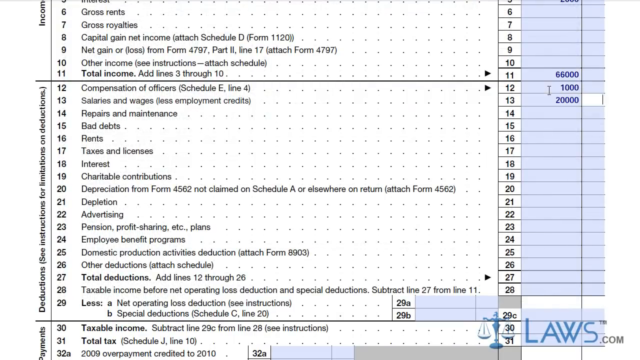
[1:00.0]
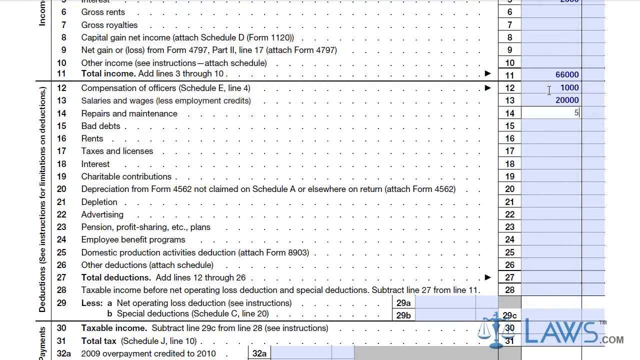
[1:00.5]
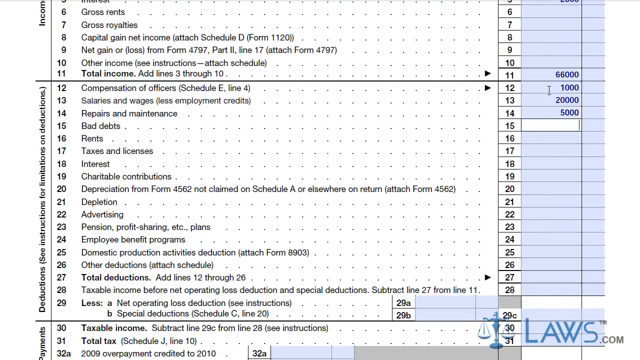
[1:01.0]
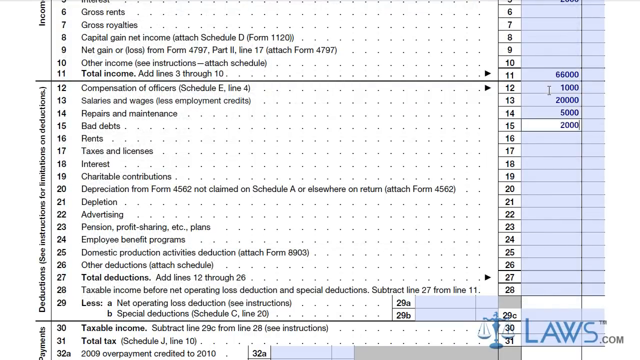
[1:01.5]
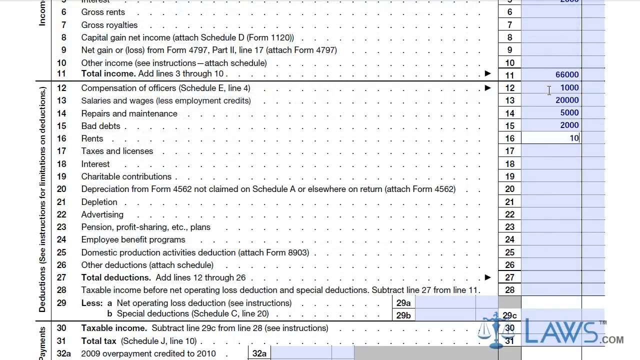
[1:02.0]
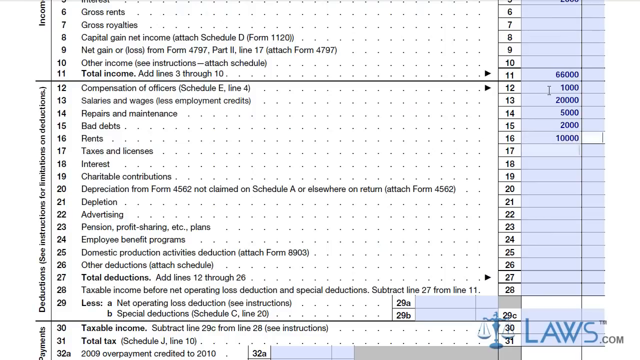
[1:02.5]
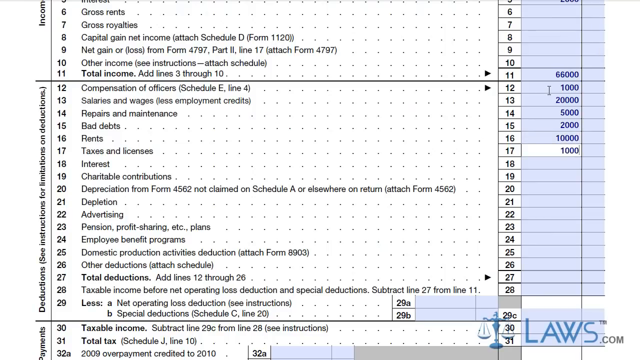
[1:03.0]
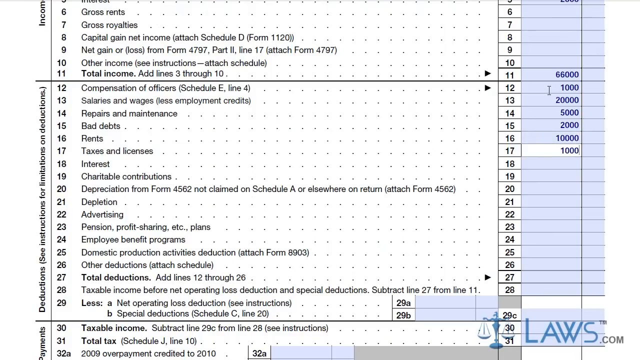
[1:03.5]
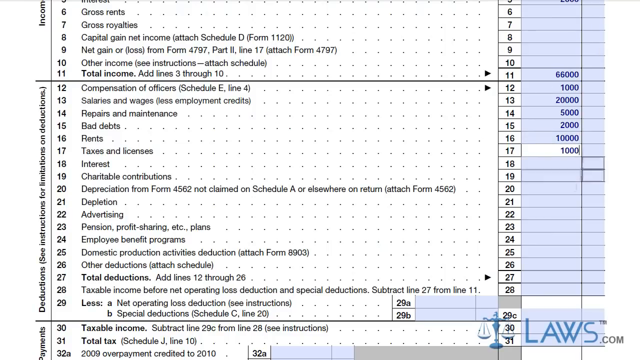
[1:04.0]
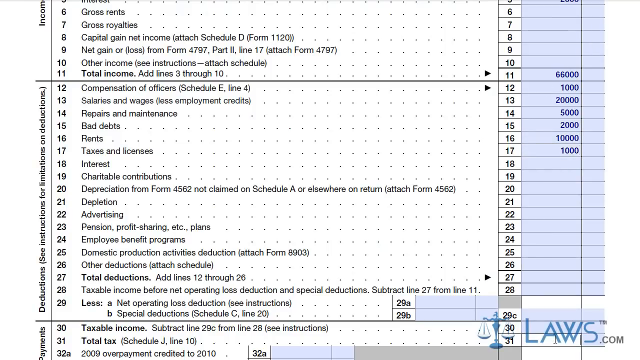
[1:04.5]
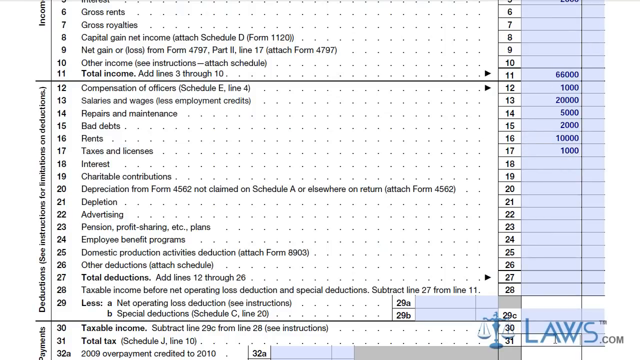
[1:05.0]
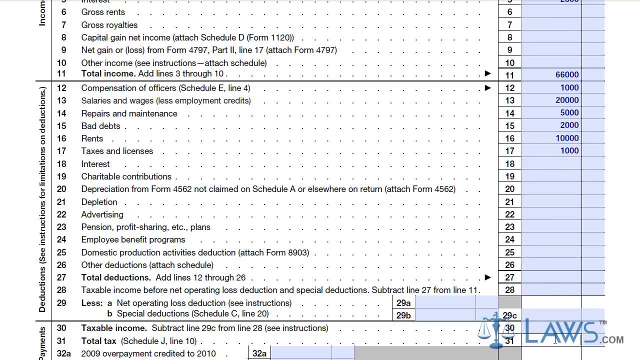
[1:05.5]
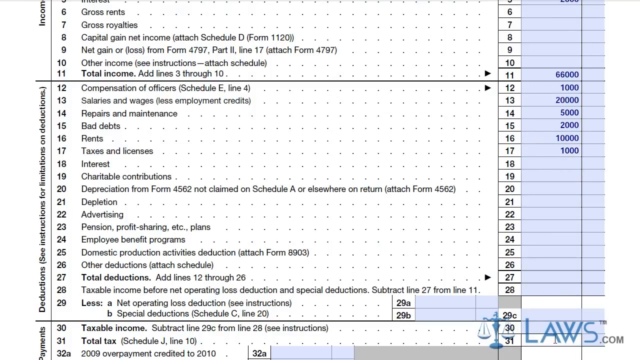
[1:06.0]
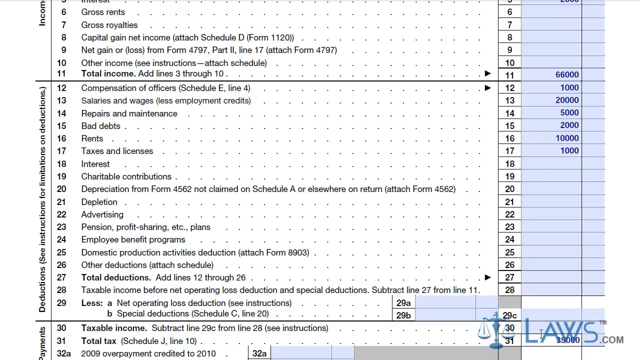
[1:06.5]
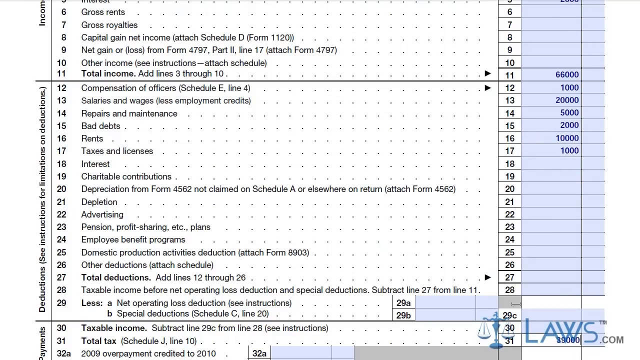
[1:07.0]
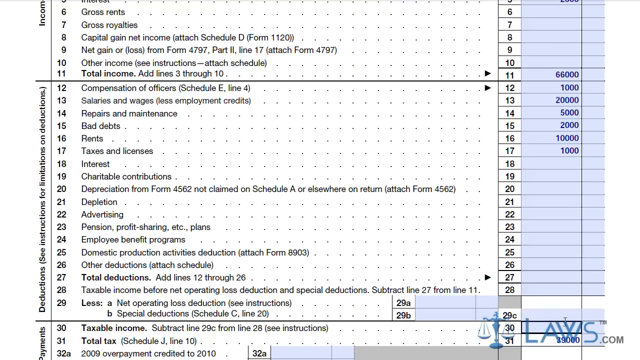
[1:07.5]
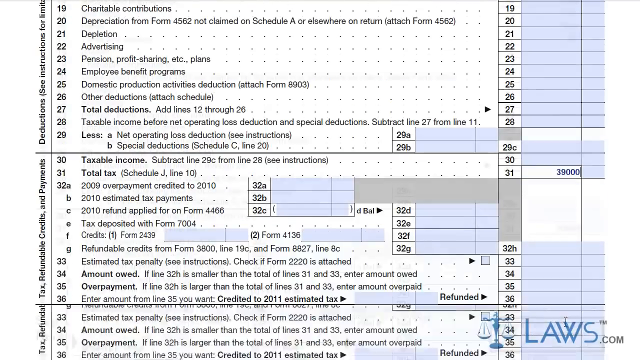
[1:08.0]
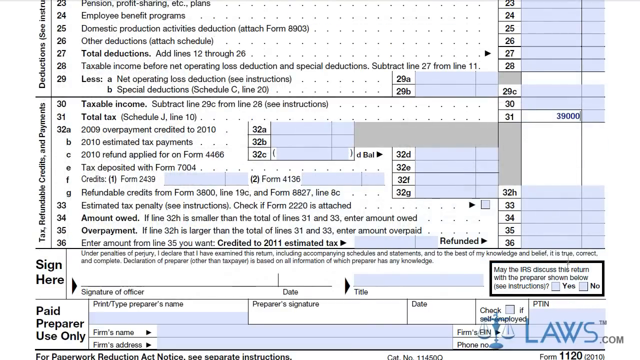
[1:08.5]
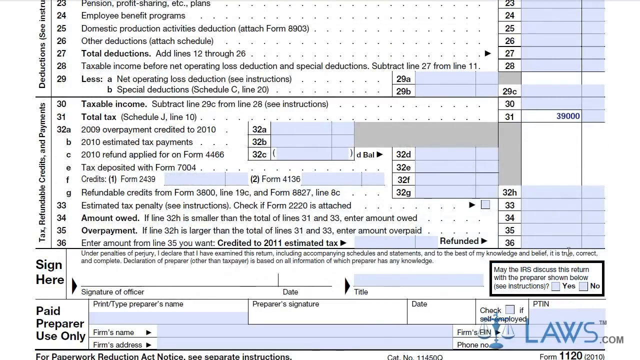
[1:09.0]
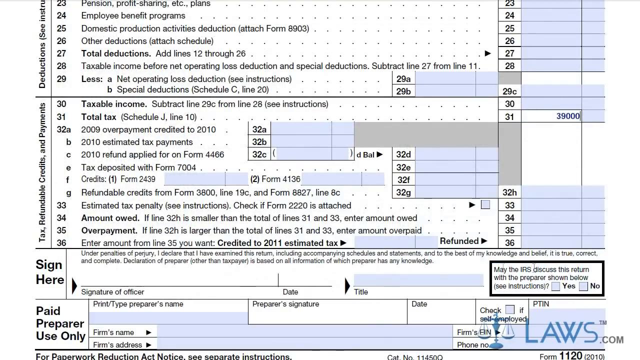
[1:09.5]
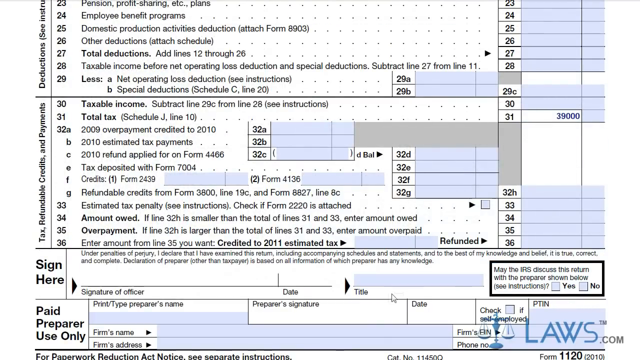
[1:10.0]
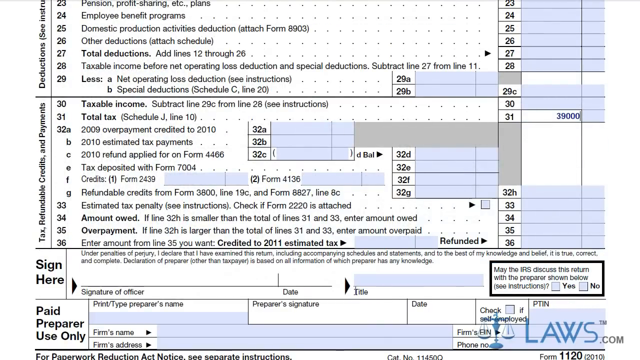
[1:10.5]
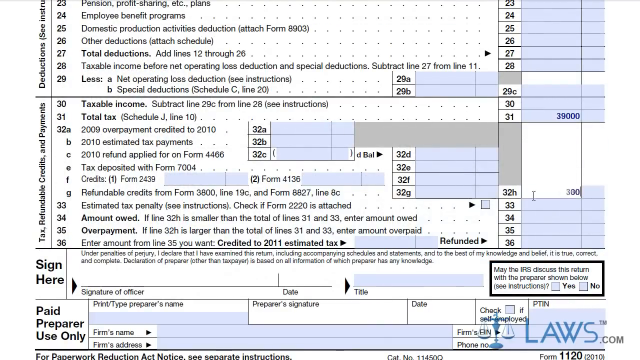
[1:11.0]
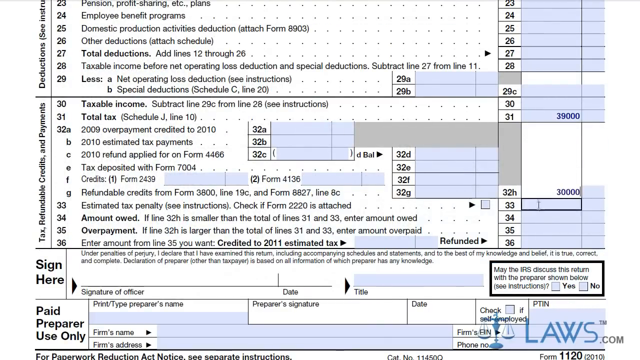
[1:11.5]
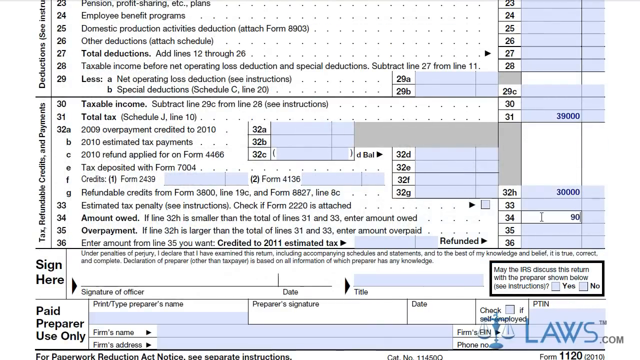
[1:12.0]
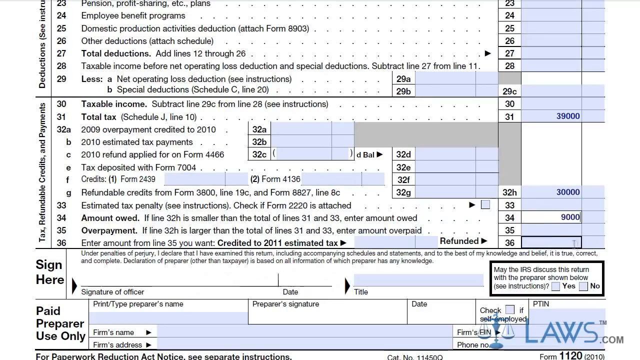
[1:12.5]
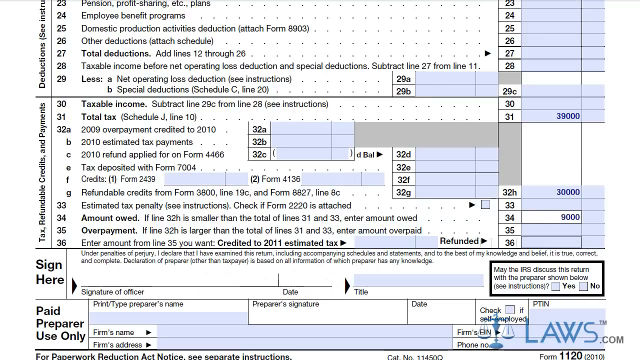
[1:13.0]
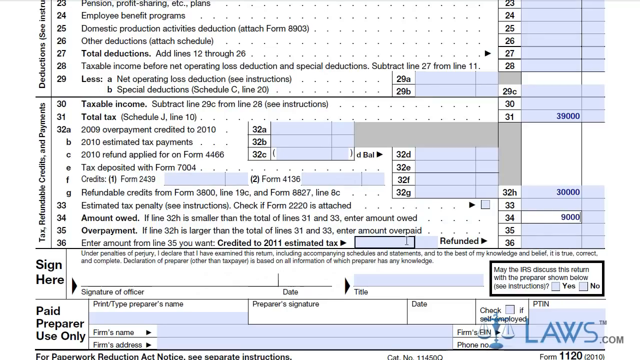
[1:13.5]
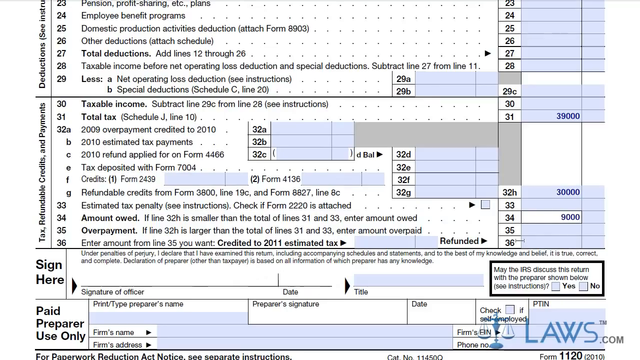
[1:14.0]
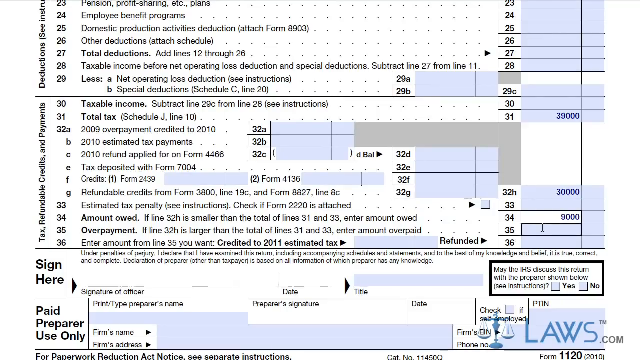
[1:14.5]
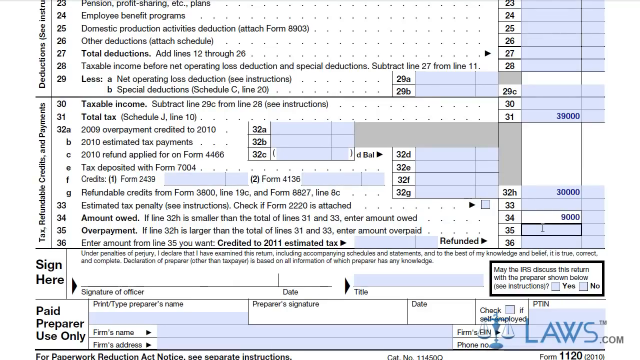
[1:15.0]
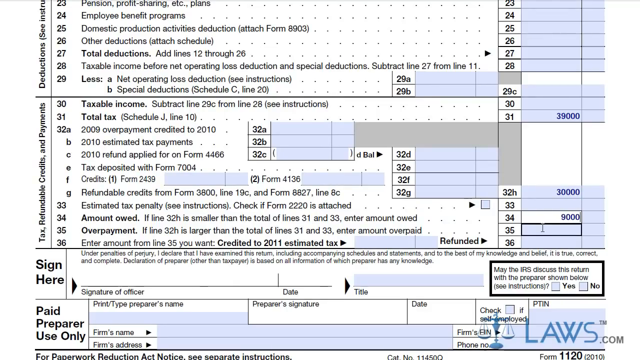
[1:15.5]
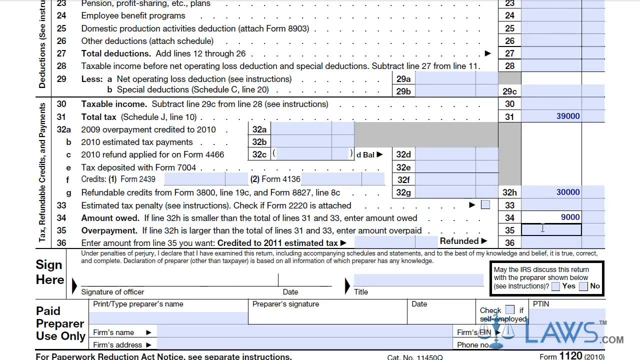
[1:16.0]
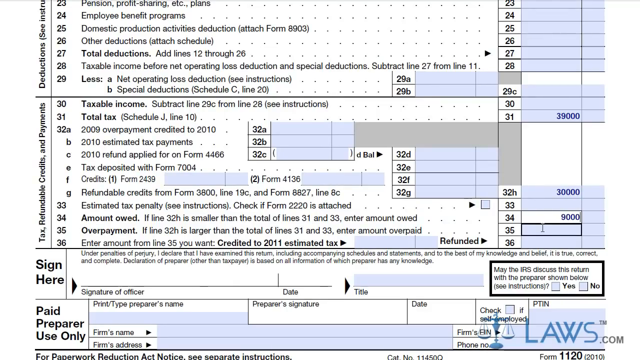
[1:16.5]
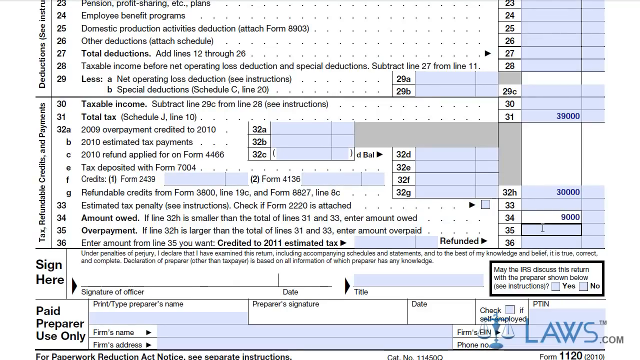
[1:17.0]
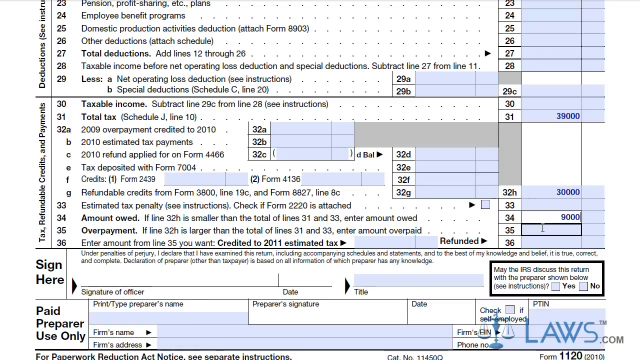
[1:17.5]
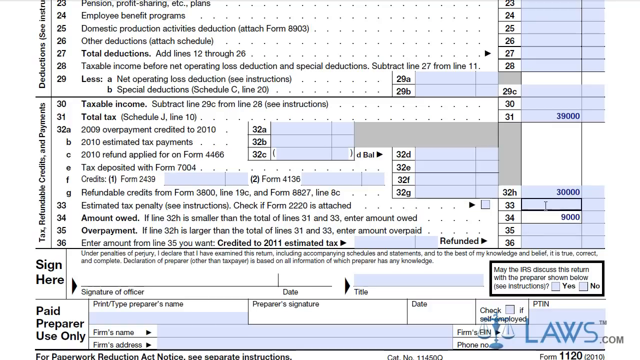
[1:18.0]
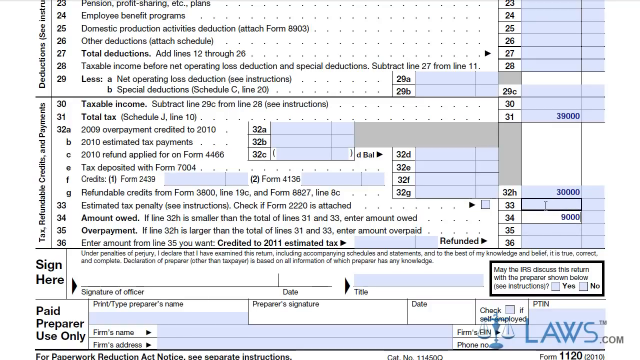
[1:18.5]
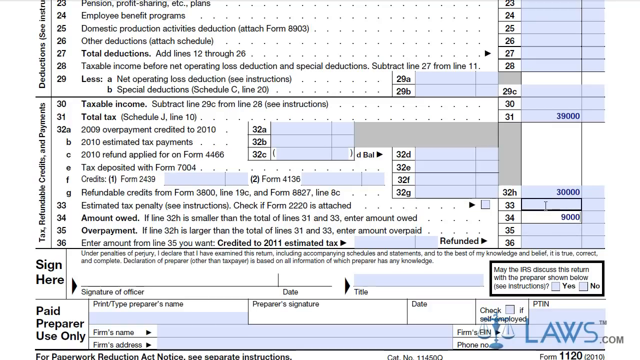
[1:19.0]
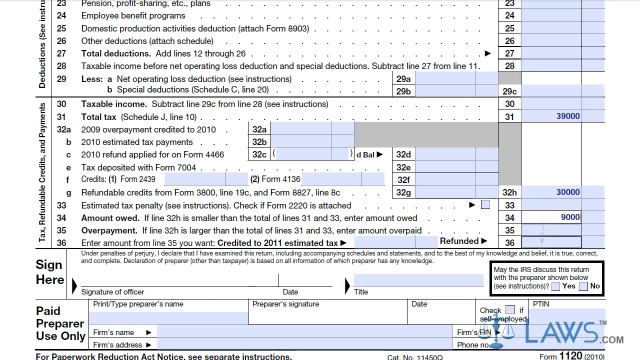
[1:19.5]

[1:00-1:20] The deductions section of the form lists lines numbered 12 through 29A, with entries filled in: compensation of officers, 1,000; salaries and wages, less employment credits, 20,000; repairs and maintenance, 5,000; bad debts, 2,000; rents, 10,000; taxes and licenses, 1,000. The lines include compensation of officers (12), salaries and wages (13), repairs and maintenance (14), bad debts (15), rents (16), taxes and licenses, interest (17), charitable contributions (18), 19, depreciation (20), depletion (21), advertising (22), pension profit sharing (23), employee benefit programs (24), domestic production activities (25), other deductions (26), total deductions (27), taxable income before net operating expenses (28), and less net operating loss deduction (29). The view then moves down to the tax, refundable credits and payments section, and on to the next section.